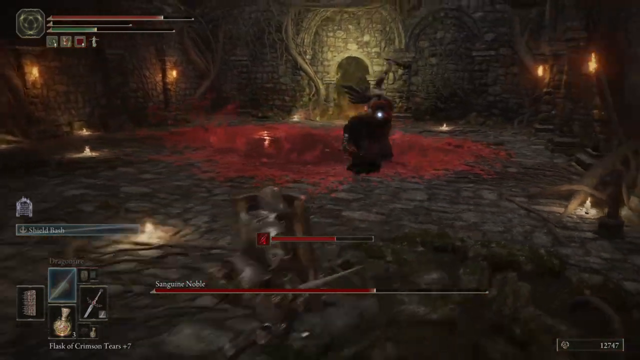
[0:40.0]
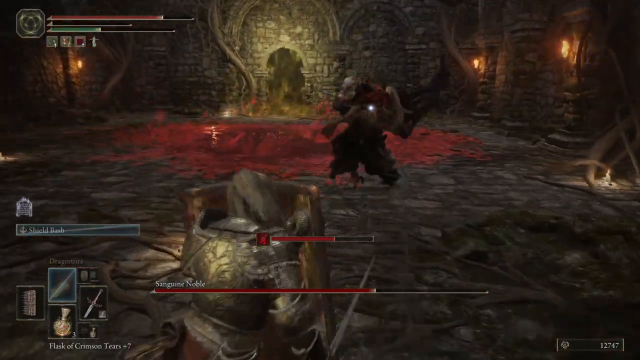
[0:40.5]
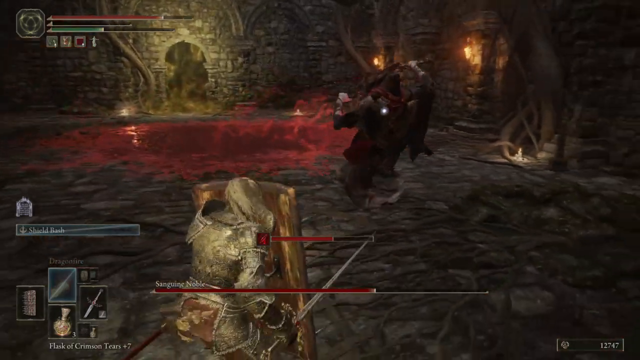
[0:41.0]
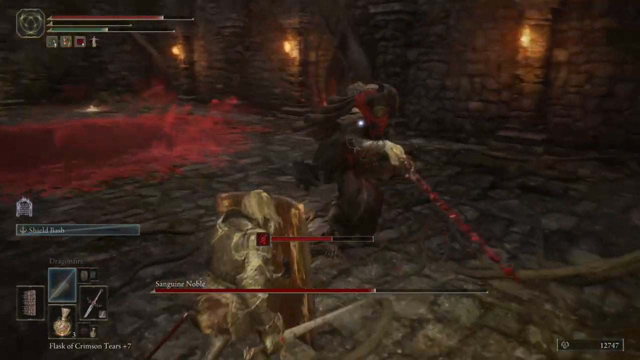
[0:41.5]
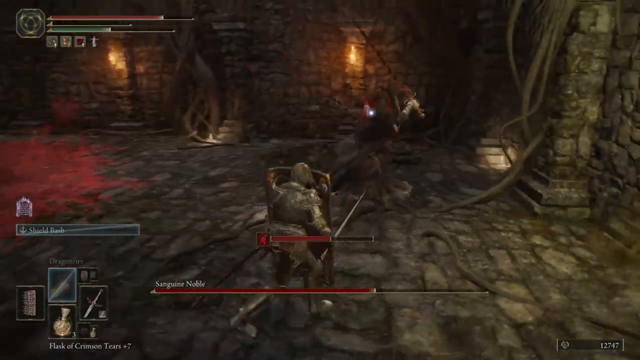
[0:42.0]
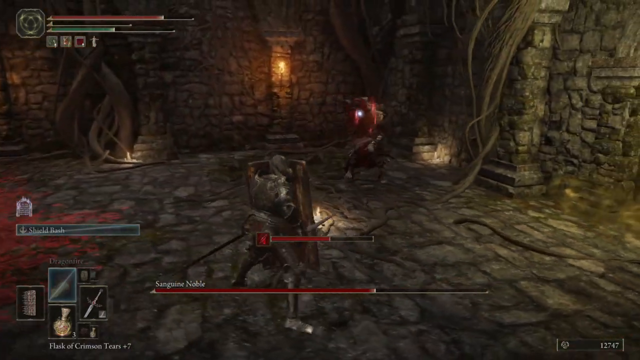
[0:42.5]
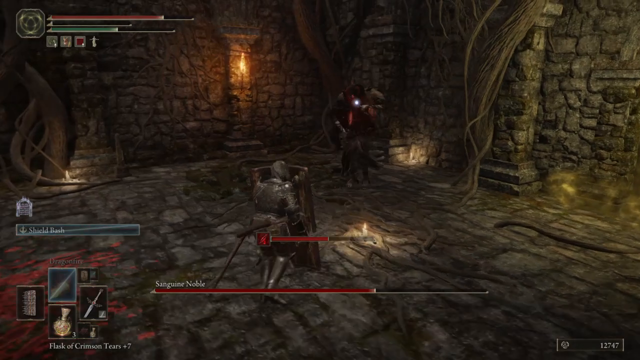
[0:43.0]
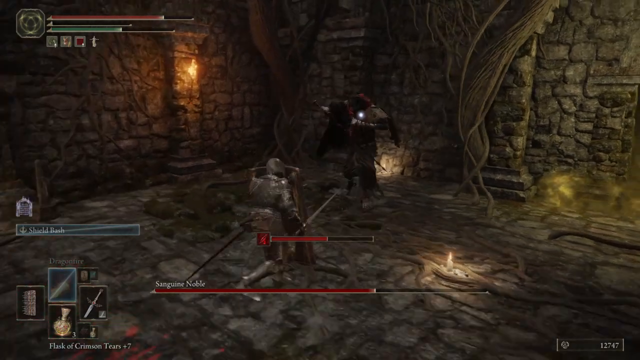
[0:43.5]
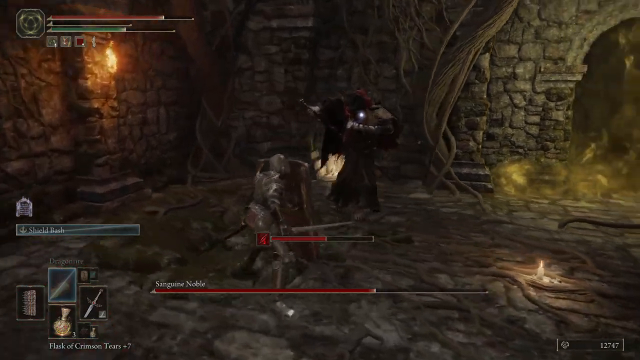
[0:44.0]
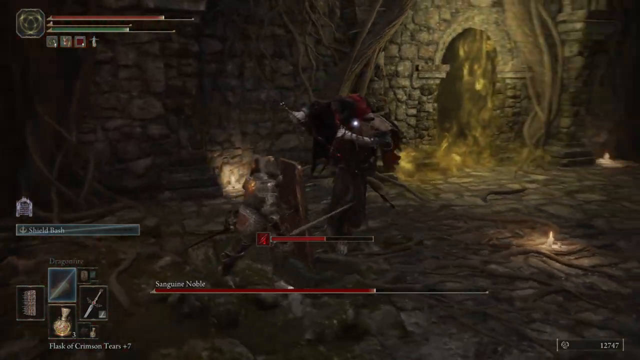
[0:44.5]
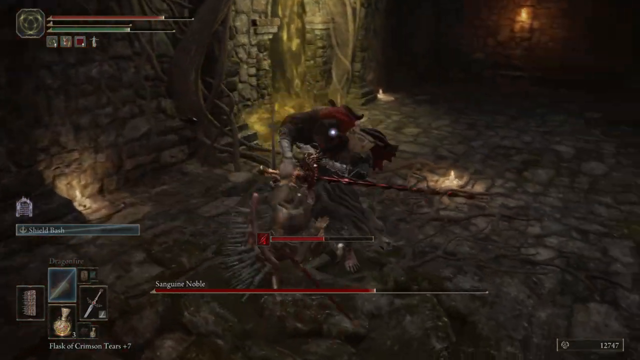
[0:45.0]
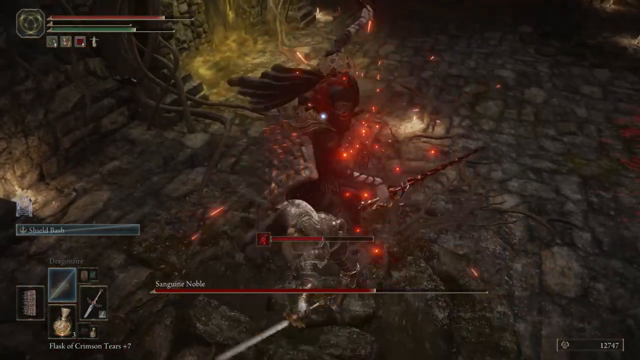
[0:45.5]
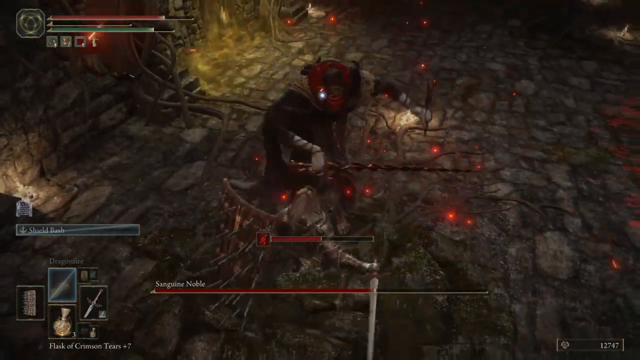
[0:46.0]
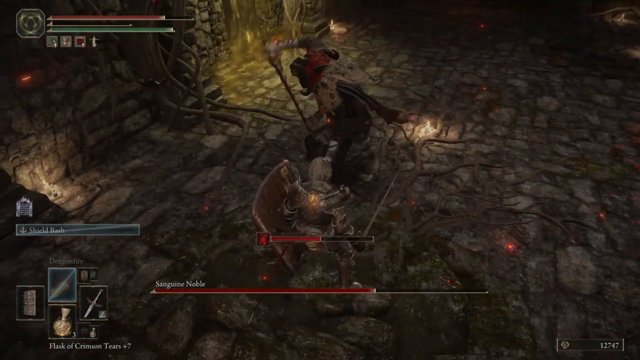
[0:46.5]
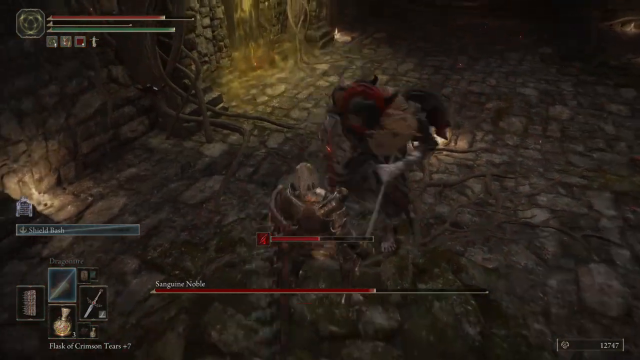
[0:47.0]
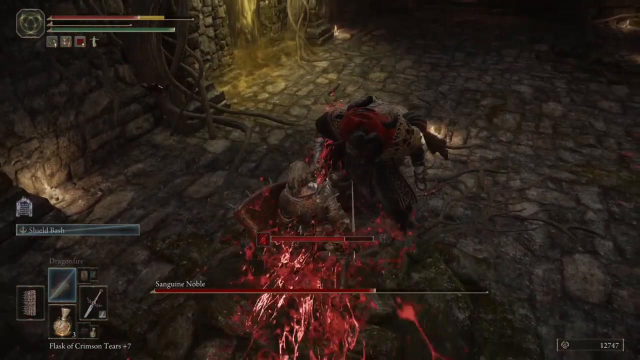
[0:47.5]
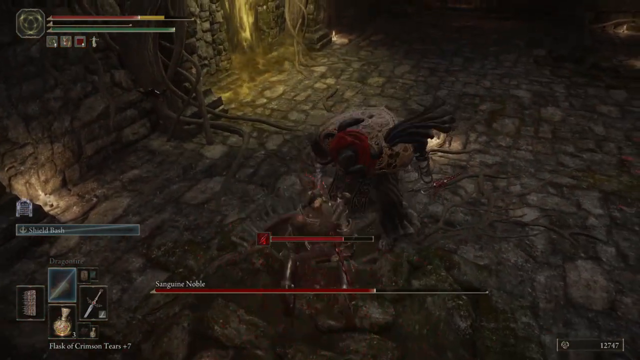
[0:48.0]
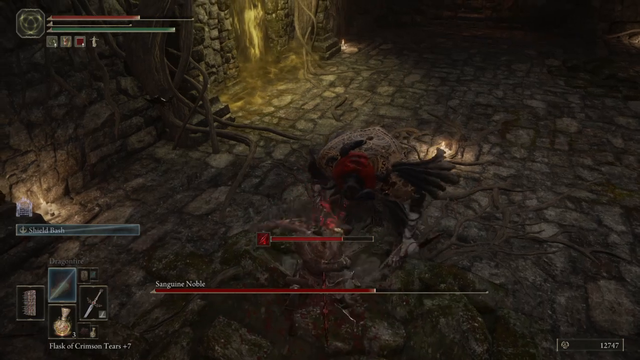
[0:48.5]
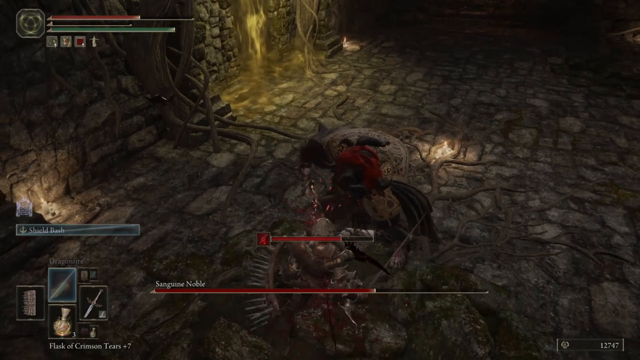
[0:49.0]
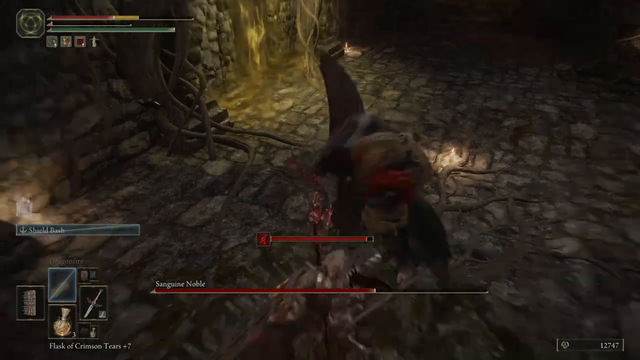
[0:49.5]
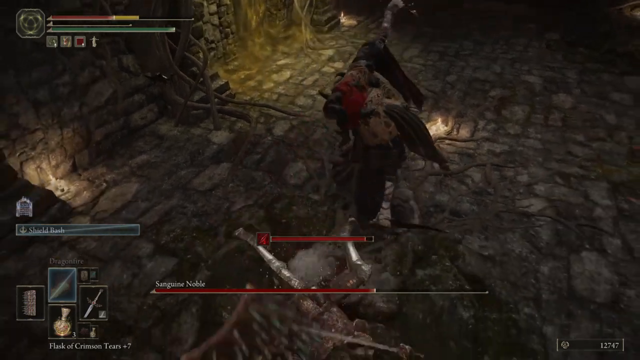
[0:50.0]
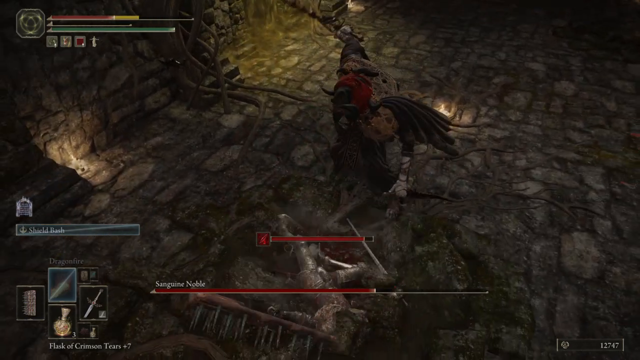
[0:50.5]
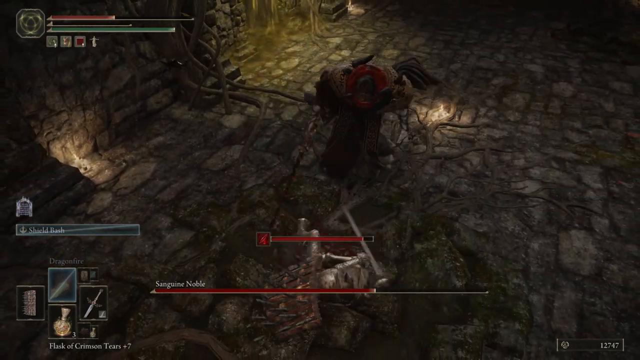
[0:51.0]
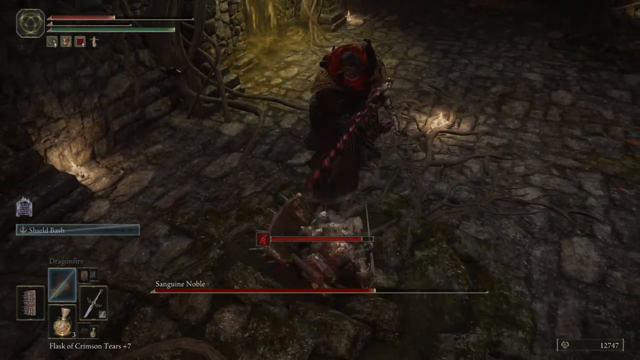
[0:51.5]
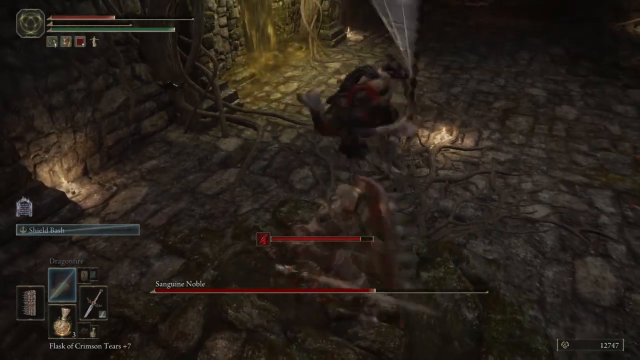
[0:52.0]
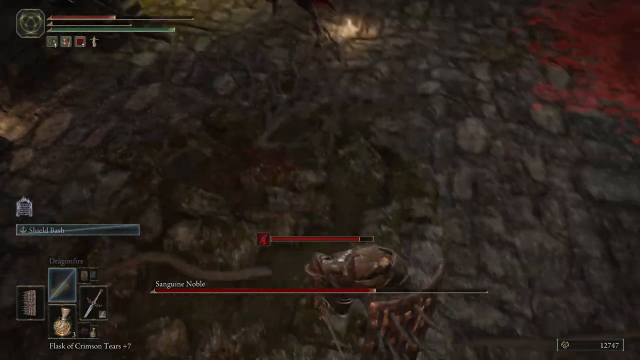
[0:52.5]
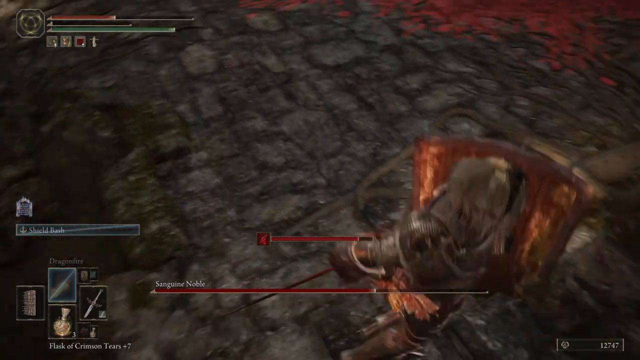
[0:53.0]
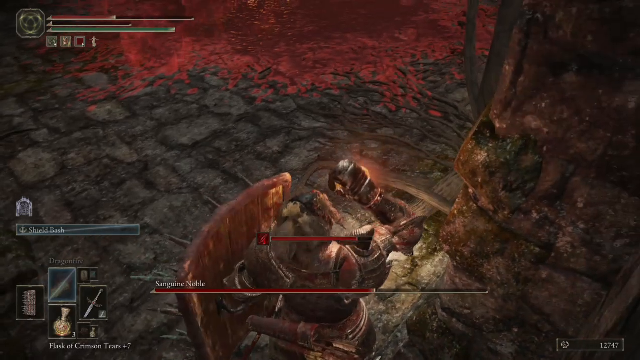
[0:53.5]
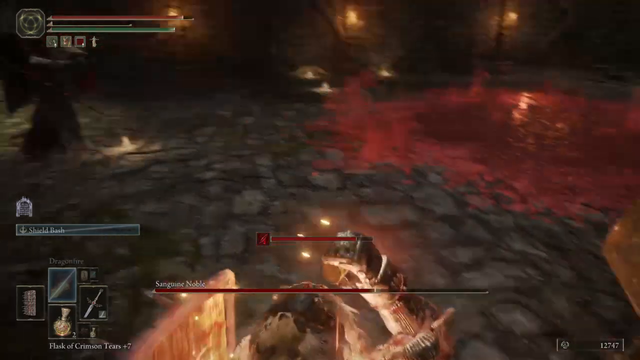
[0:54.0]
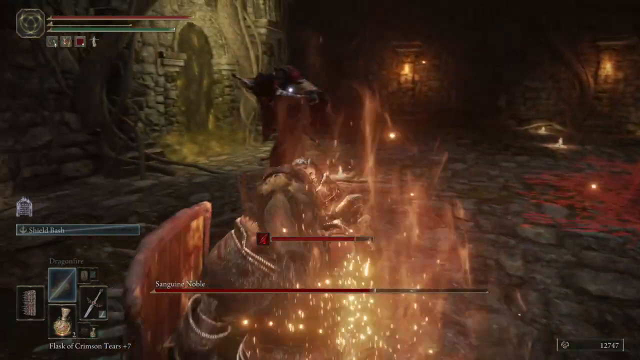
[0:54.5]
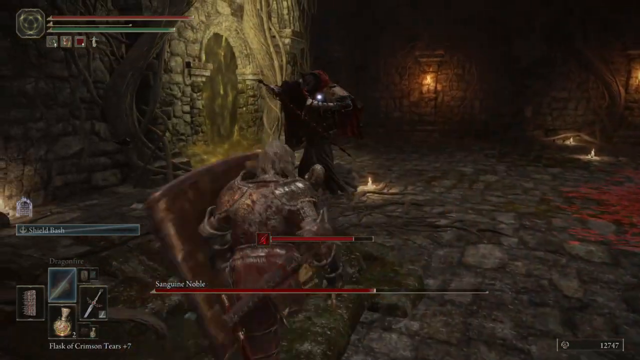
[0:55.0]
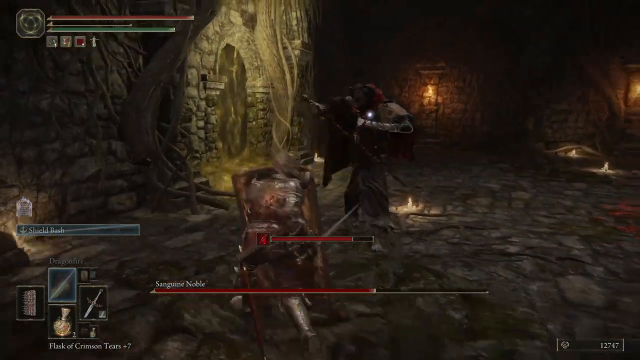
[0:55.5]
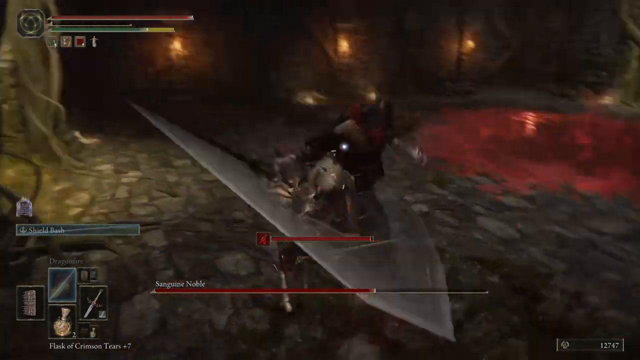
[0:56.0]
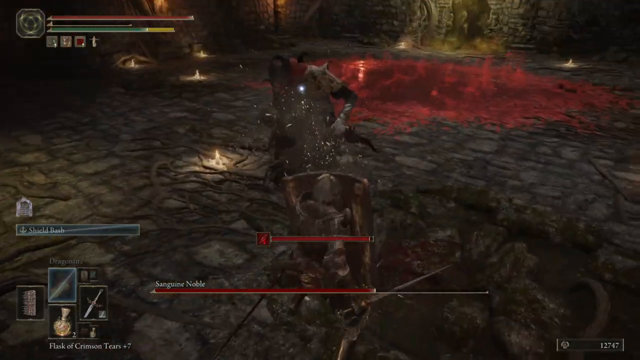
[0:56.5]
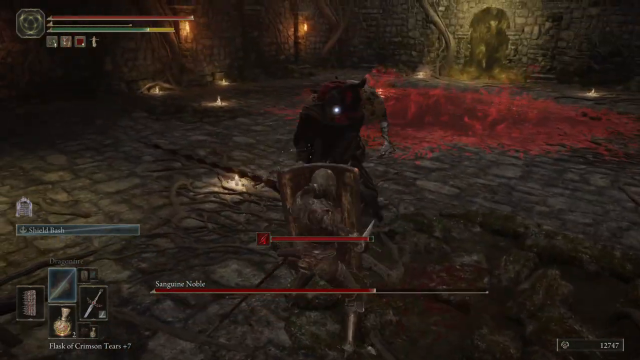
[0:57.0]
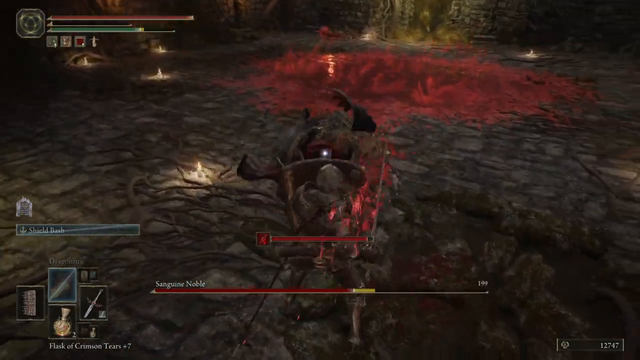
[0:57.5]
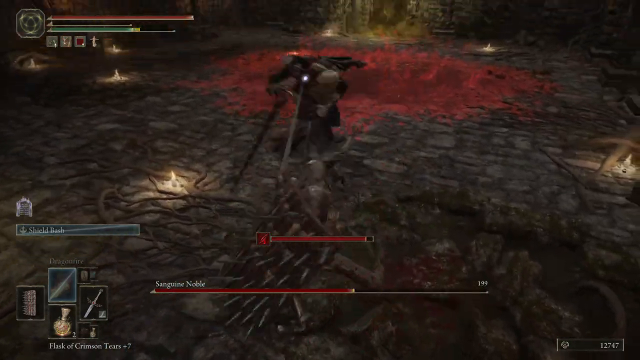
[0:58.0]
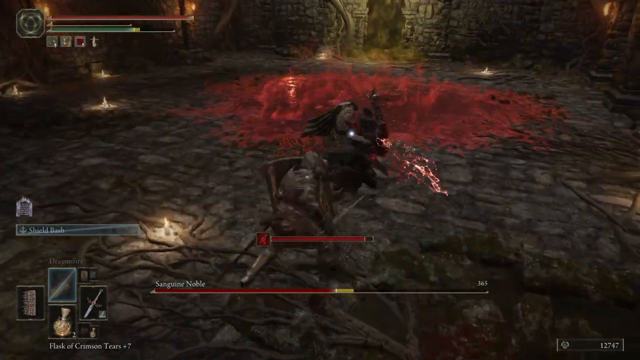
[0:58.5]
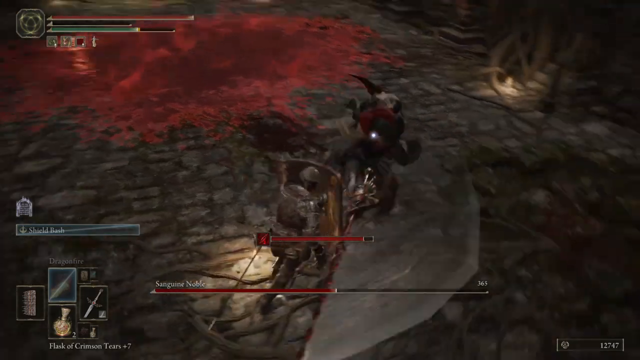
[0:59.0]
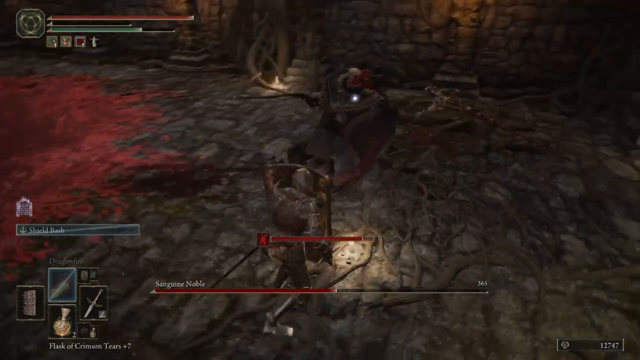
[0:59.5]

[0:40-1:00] The two characters keep fighting as the villain comes through with heavy sword attacks and stabs the main character through the chest. In the top left corner there is a red health bar; when the character is stabbed, a big portion of it turns yellow and then that yellow portion disappears, leaving a large percentage of the red depleted. The main character takes another potion, which seems to be a health potion.